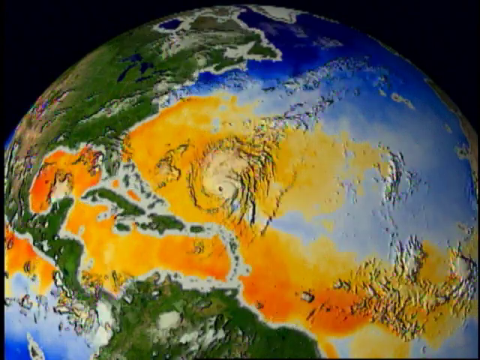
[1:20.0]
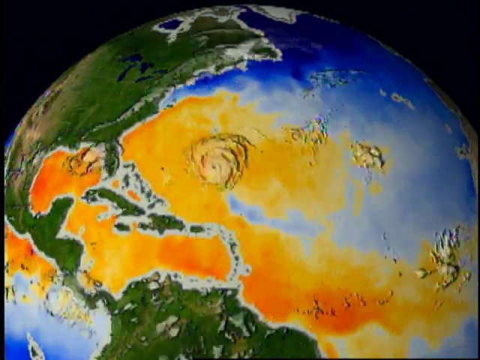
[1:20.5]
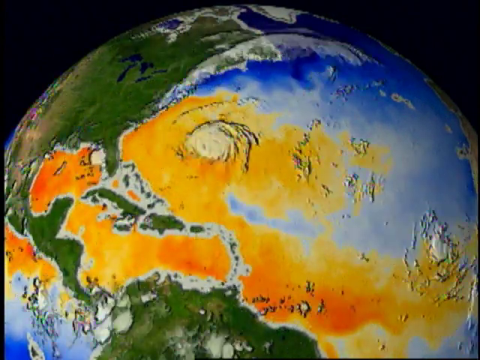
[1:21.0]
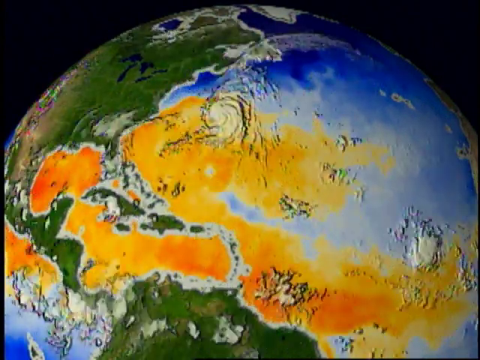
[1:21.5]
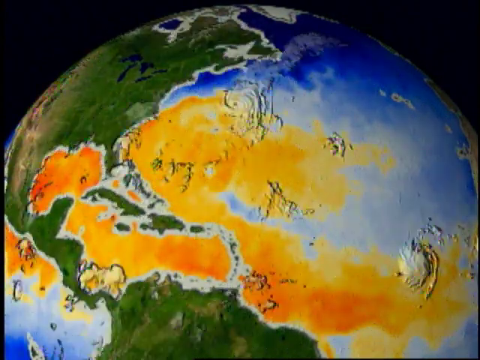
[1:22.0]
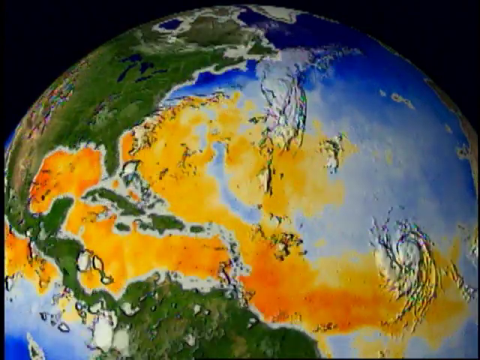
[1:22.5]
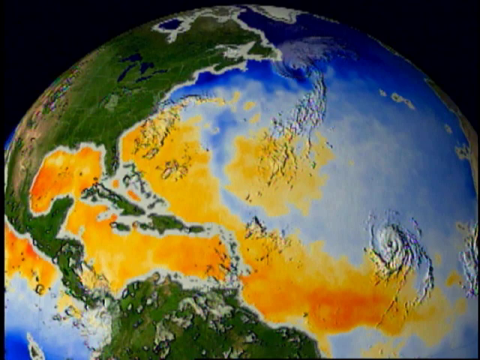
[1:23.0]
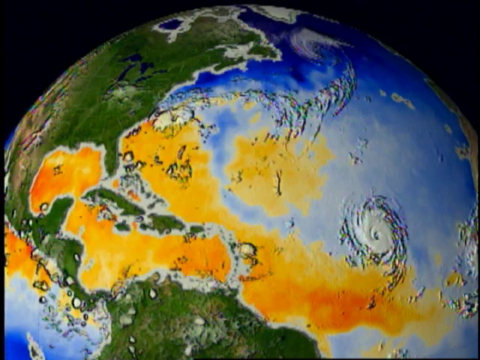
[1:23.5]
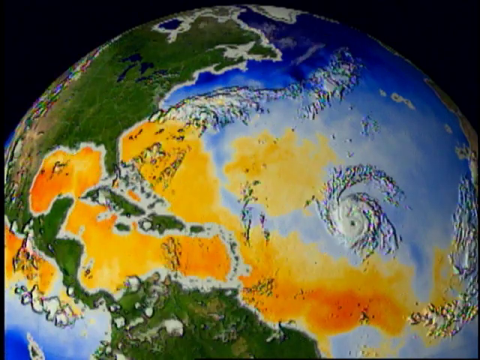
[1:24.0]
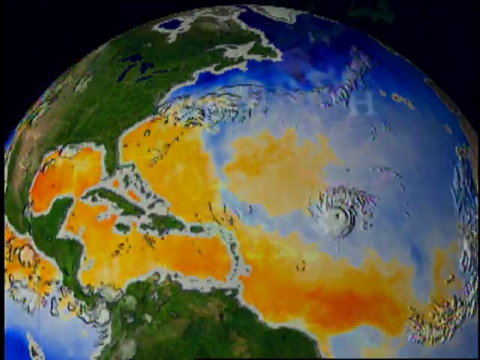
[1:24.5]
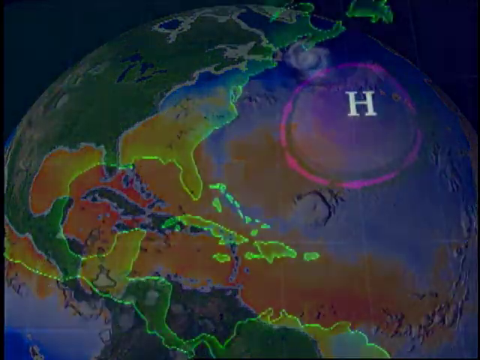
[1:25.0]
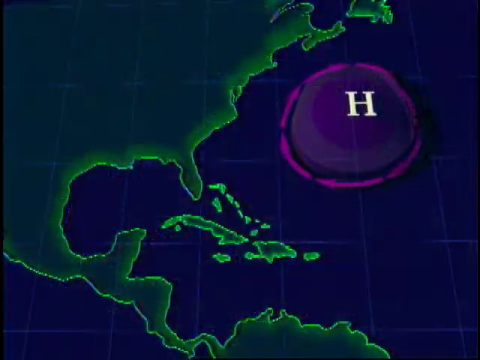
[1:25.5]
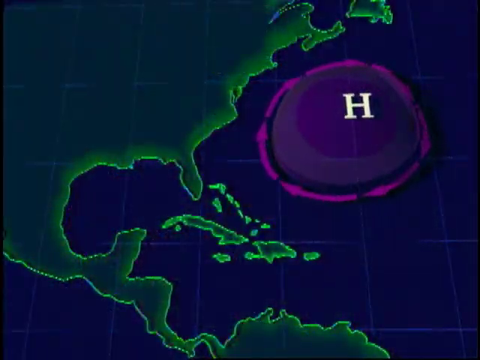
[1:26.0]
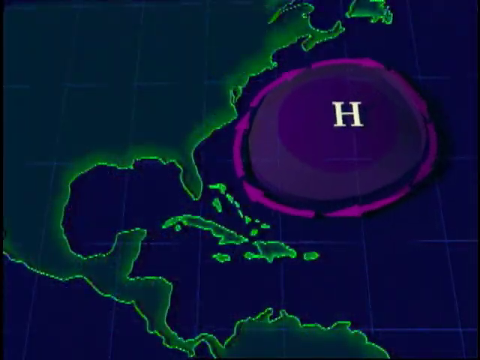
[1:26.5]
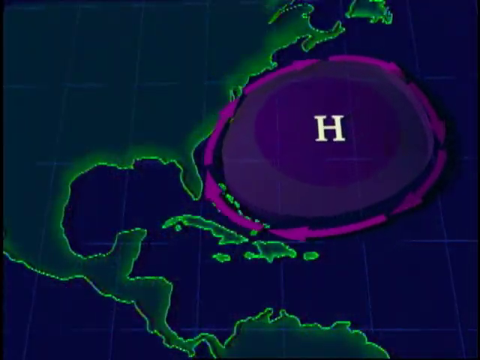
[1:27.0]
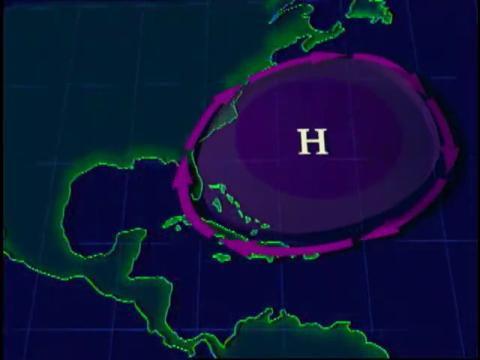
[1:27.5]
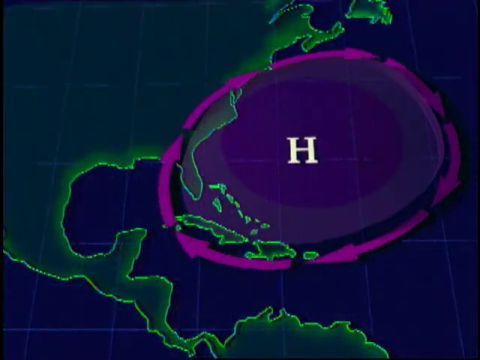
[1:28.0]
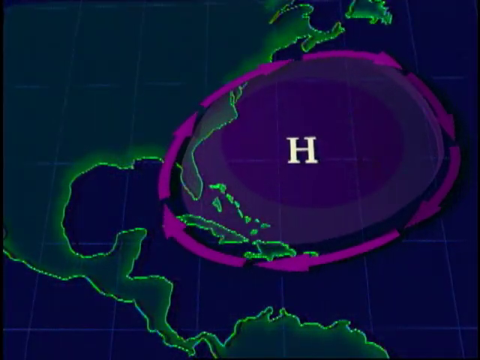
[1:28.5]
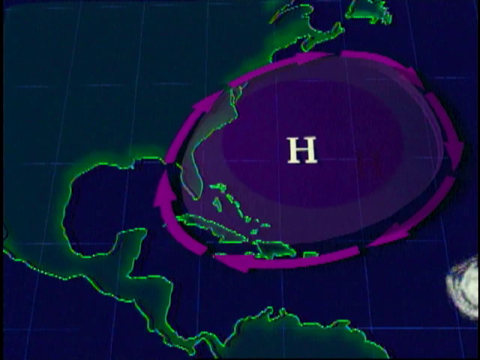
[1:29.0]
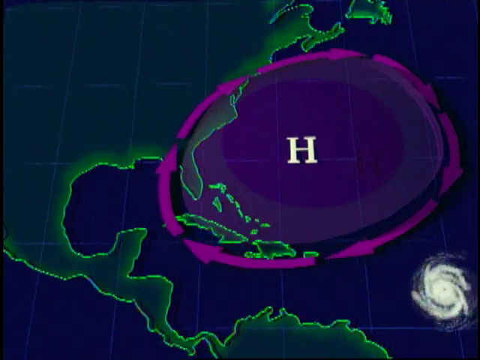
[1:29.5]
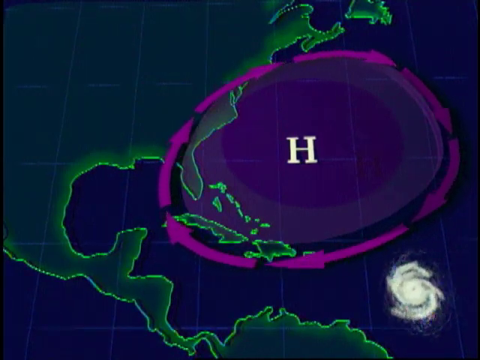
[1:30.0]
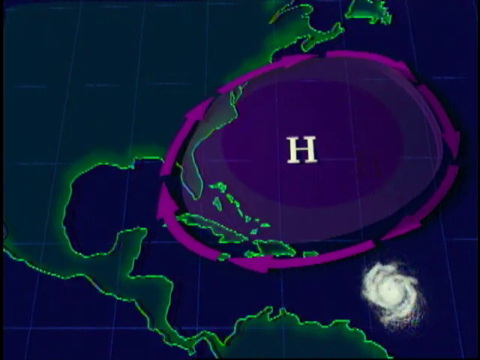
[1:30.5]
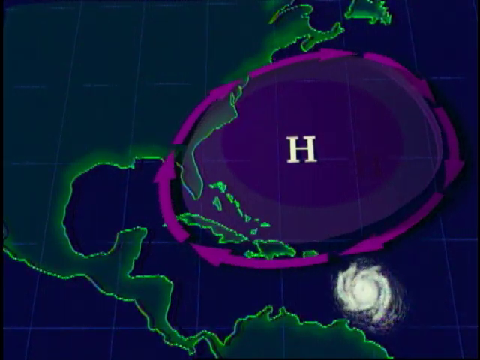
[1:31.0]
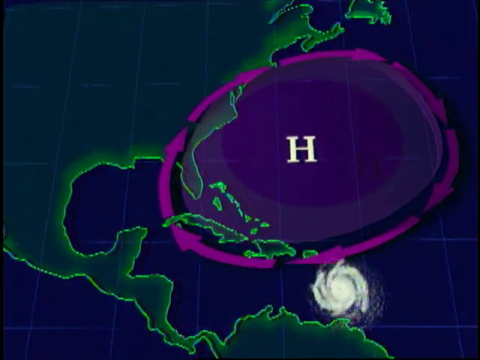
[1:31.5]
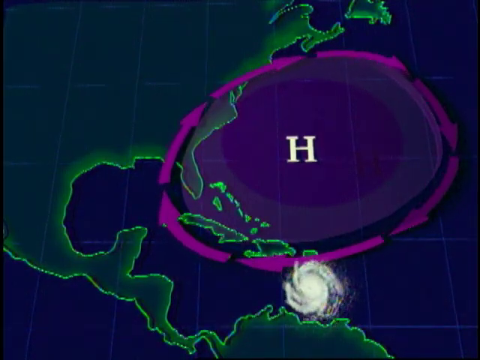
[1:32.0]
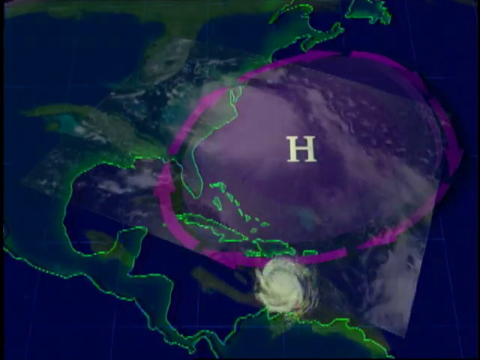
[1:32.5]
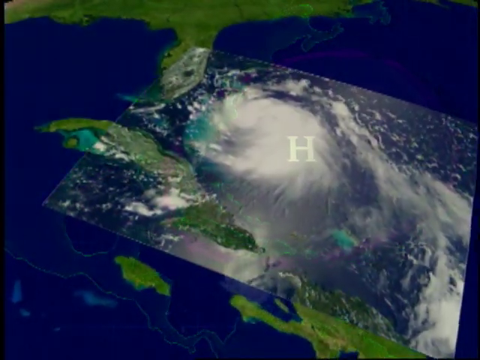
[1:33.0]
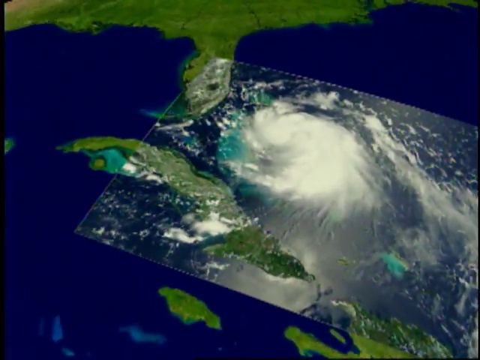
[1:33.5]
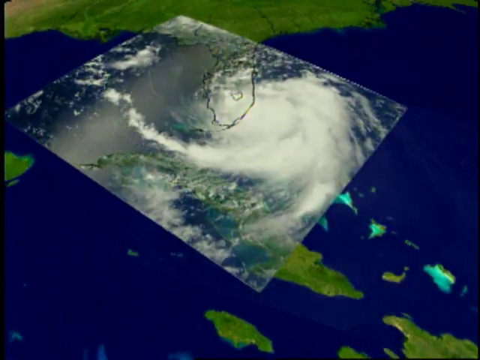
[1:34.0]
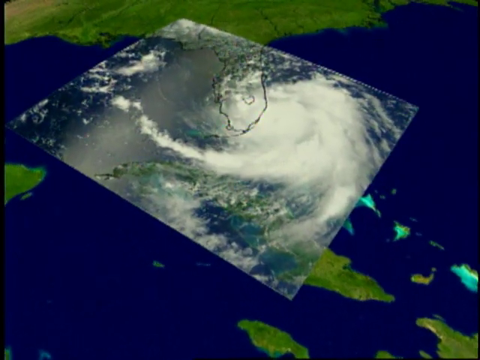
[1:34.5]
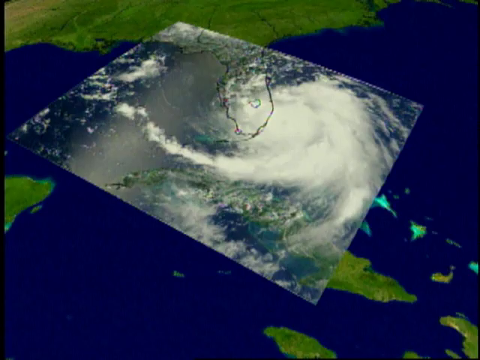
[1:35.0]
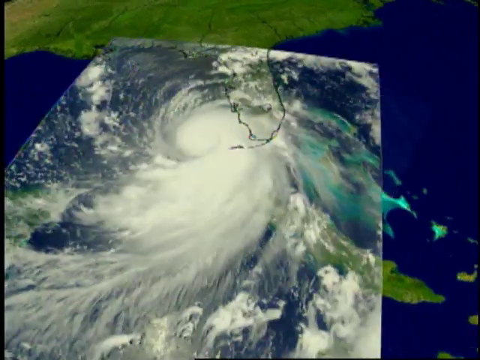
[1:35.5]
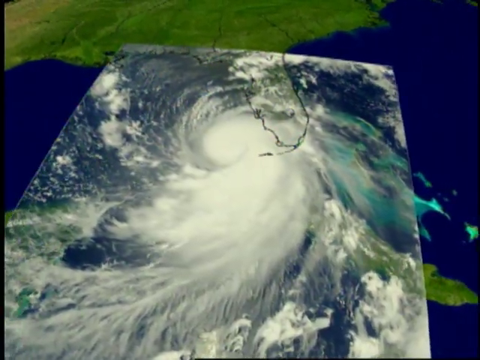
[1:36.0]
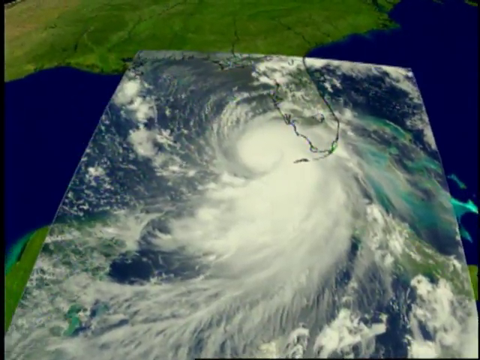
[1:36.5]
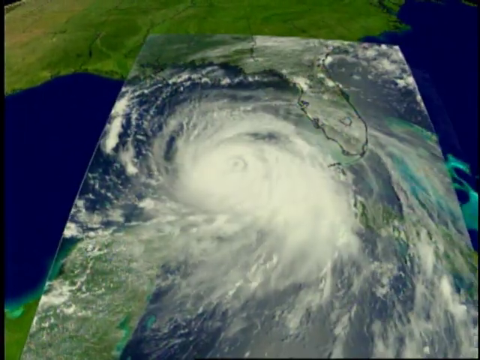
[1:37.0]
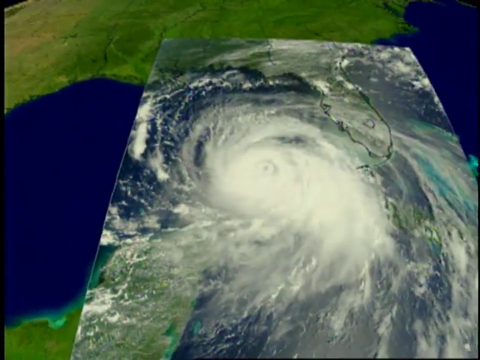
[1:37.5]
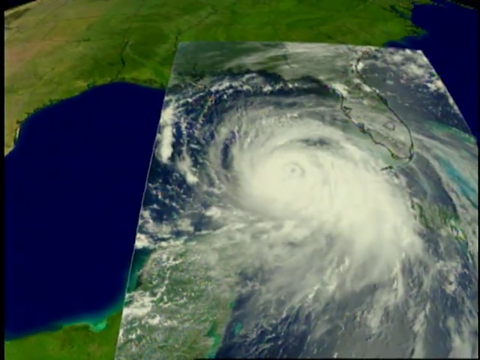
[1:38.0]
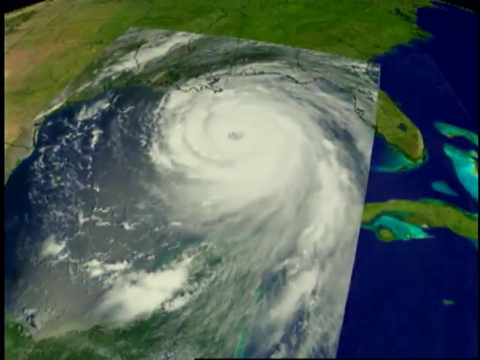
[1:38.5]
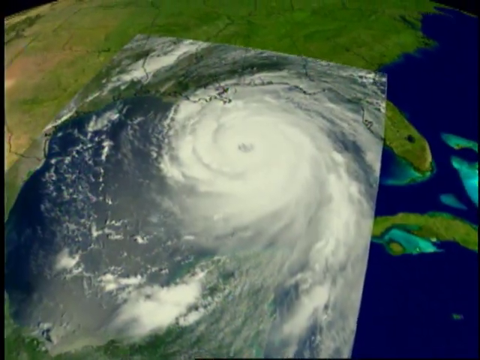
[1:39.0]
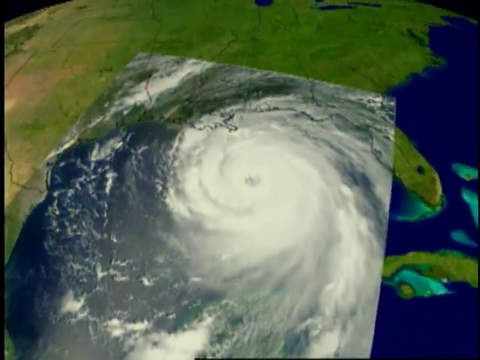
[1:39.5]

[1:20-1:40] A representation of the Earth sort of looks like a globe, with America on the left side and maybe part of the North Pole at the top, along with Central America and the top of South America. The water is blue, and warm waters appear in hues of orange and yellow: the Gulf of America and the water around Central America and the top of South America are orange and yellow, and there is a glob of orange and yellow water off the east coast of America. In the center of this glob, white clouds spin, representing a hurricane. It moves up and twirls around the east coast, and another hurricane comes. The view switches to a flat map, not a globe, showing most of America and the east coast. A purple circle with a white H in it sits off the east coast, with purple lines swirling clockwise around it. The circle gets bigger, and clouds that look like a hurricane come along the bottom of the circle toward the Gulf of Mexico. Then a more computer-style image shows the hurricane coming underneath Florida to the Gulf of Mexico and then up through the United States through Georgia.